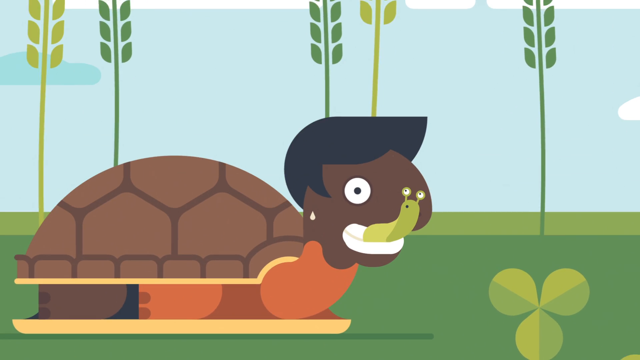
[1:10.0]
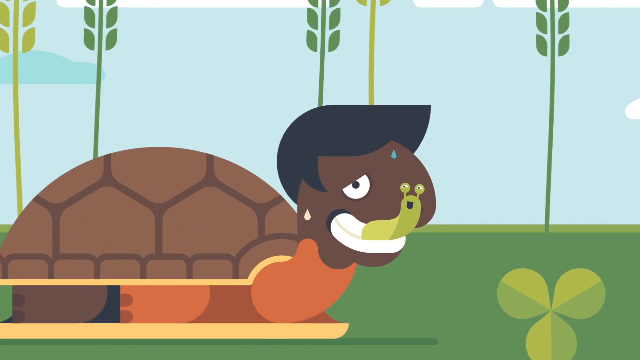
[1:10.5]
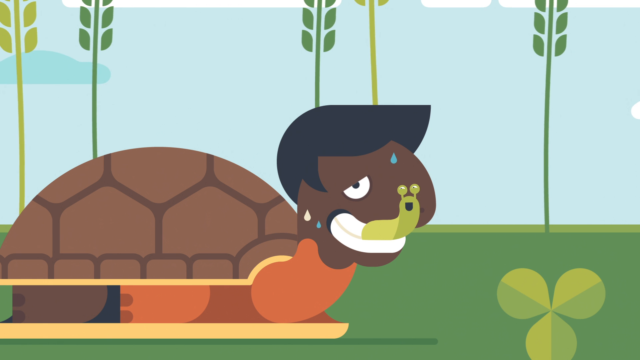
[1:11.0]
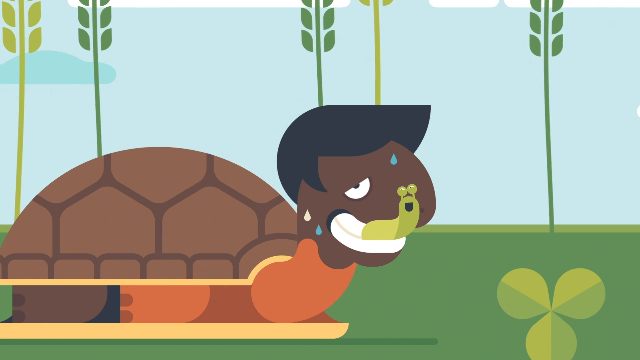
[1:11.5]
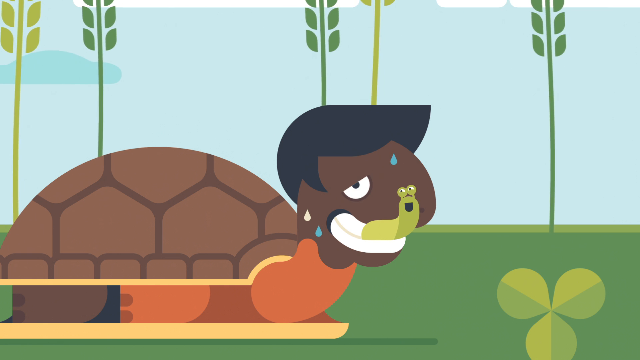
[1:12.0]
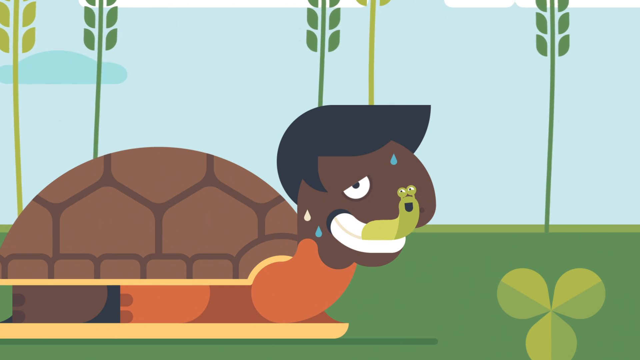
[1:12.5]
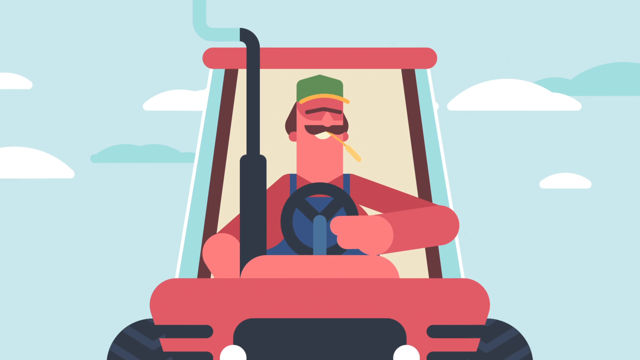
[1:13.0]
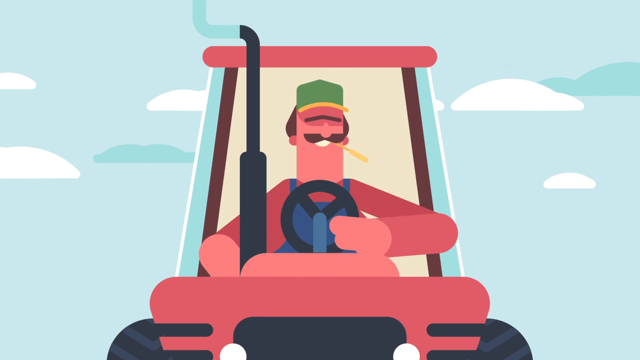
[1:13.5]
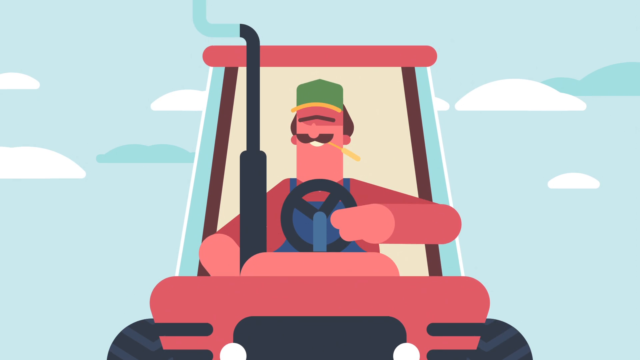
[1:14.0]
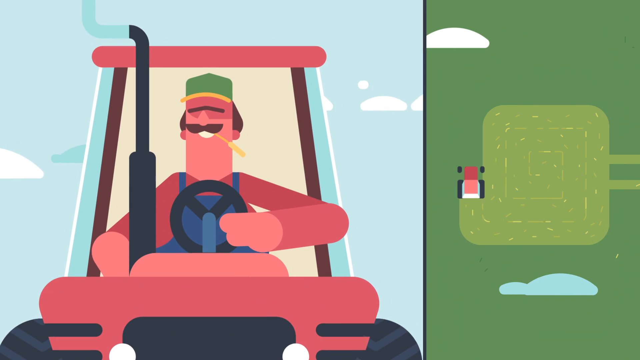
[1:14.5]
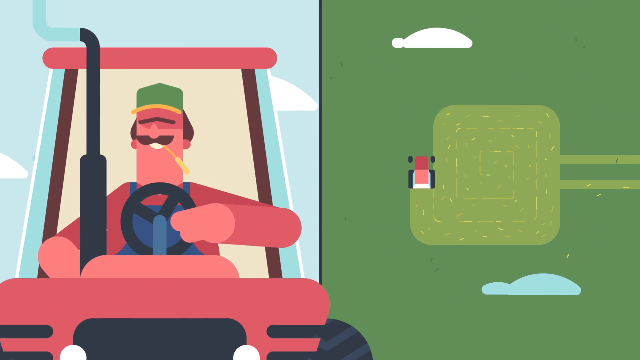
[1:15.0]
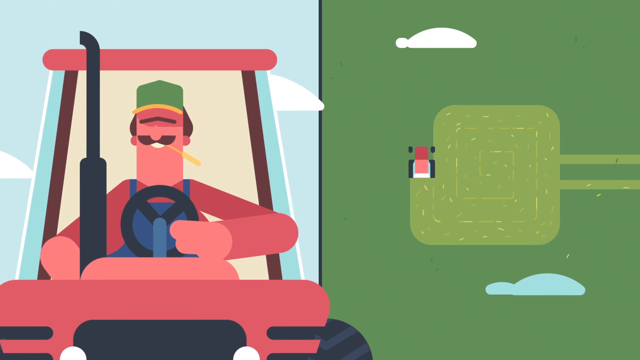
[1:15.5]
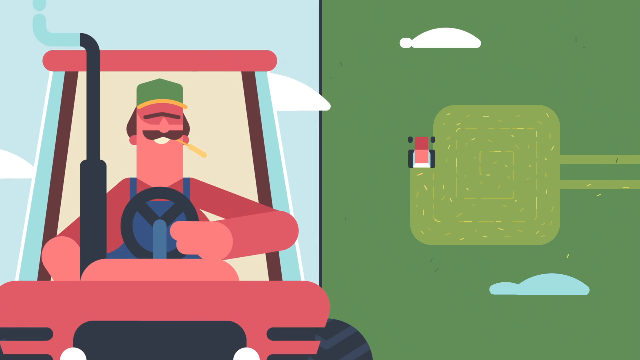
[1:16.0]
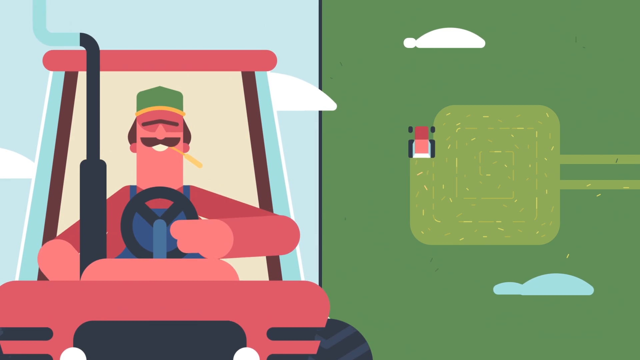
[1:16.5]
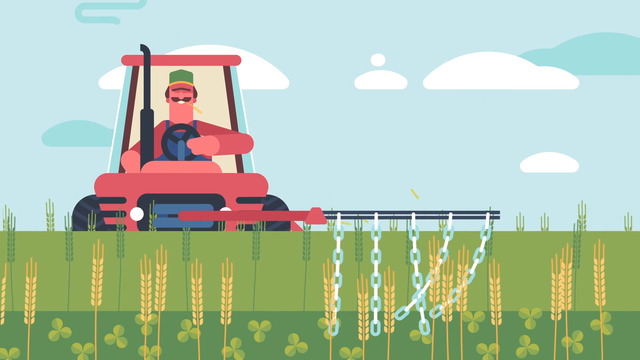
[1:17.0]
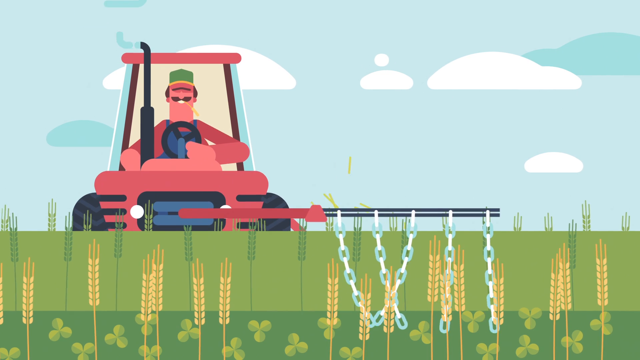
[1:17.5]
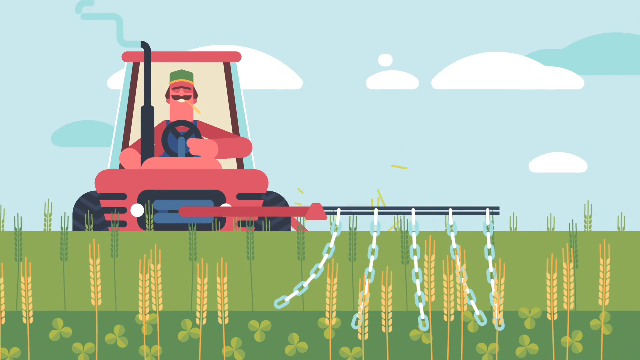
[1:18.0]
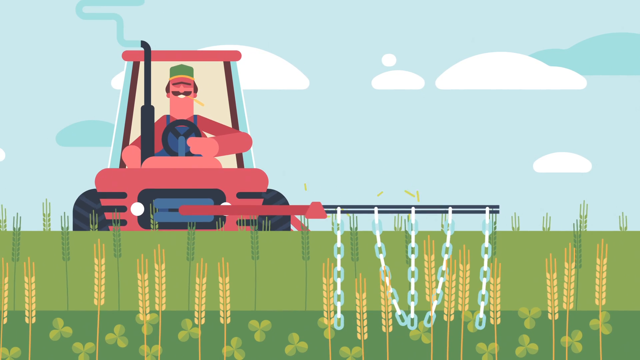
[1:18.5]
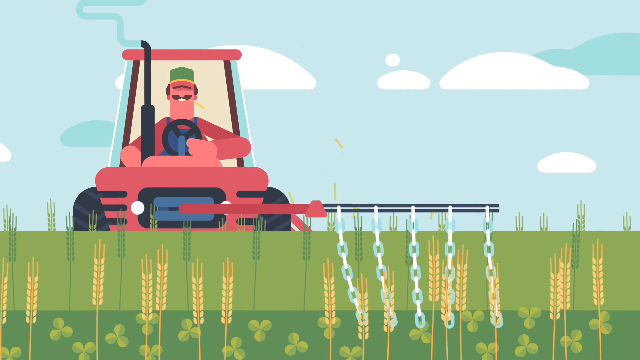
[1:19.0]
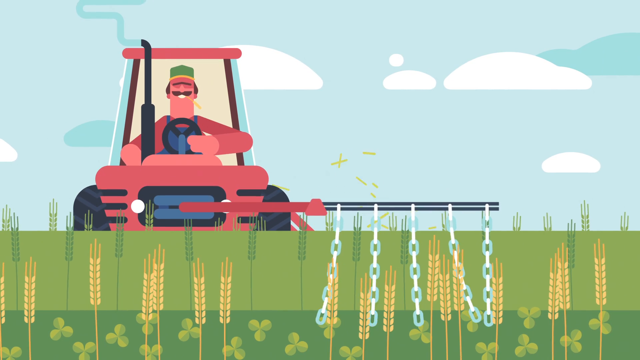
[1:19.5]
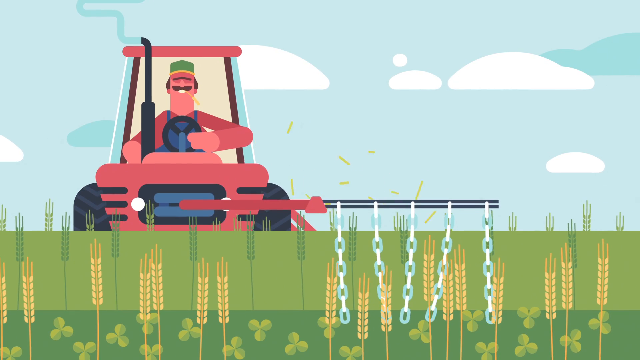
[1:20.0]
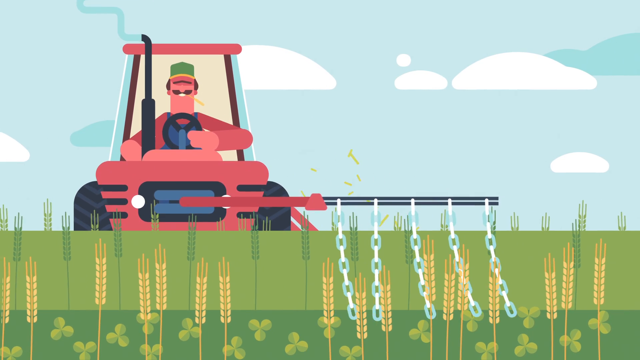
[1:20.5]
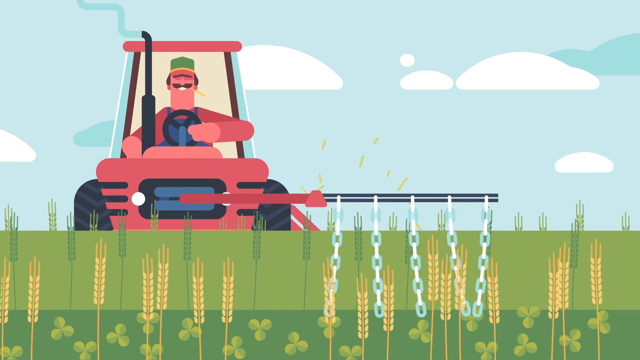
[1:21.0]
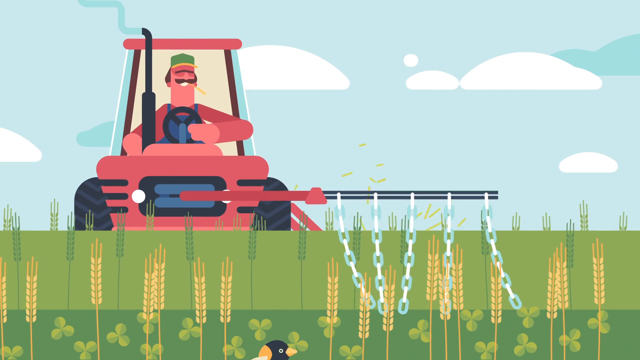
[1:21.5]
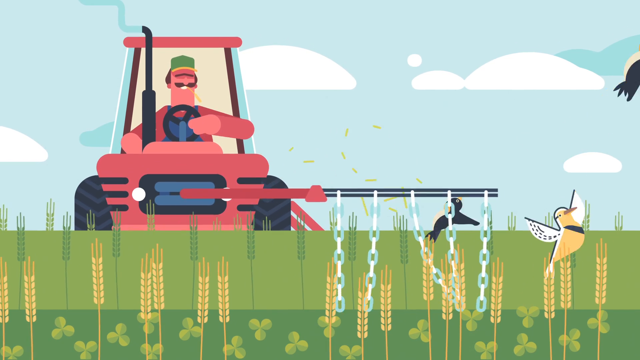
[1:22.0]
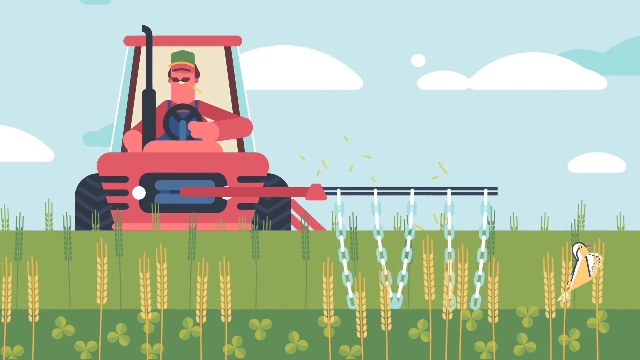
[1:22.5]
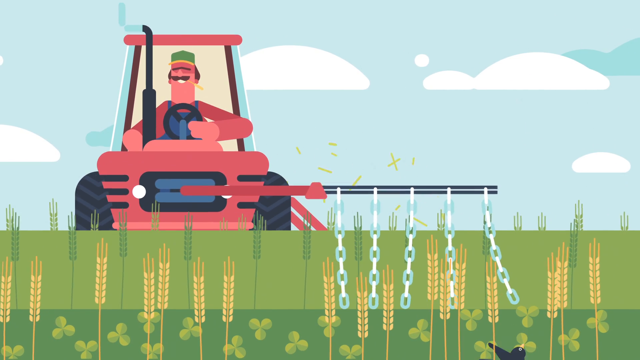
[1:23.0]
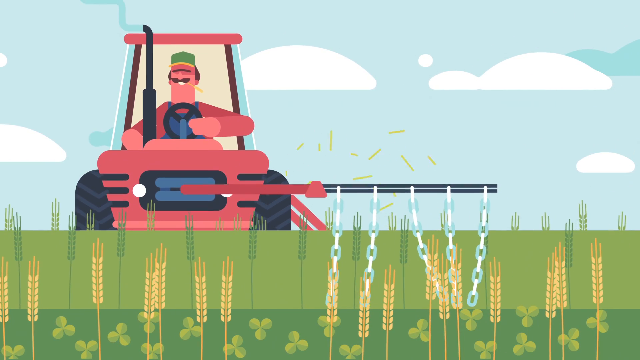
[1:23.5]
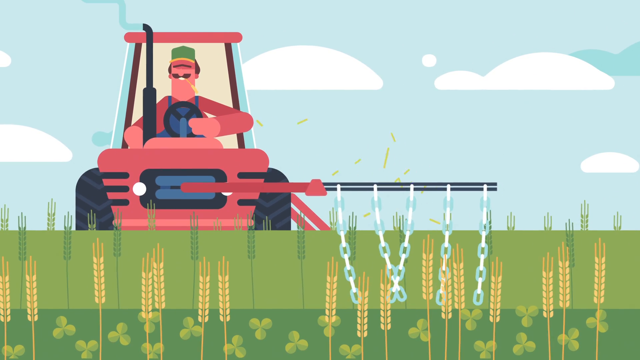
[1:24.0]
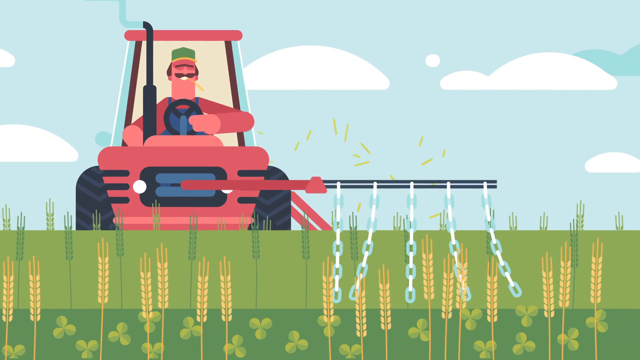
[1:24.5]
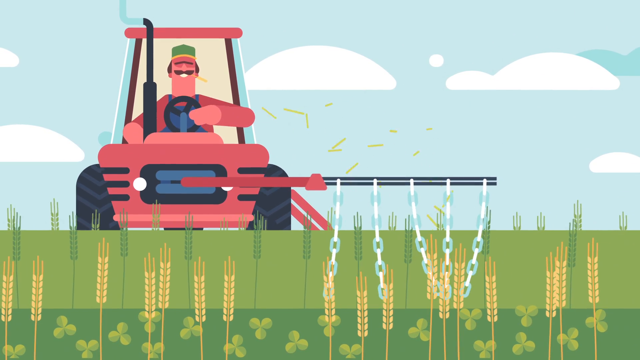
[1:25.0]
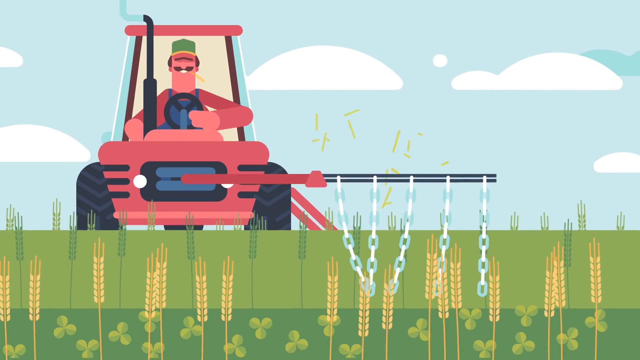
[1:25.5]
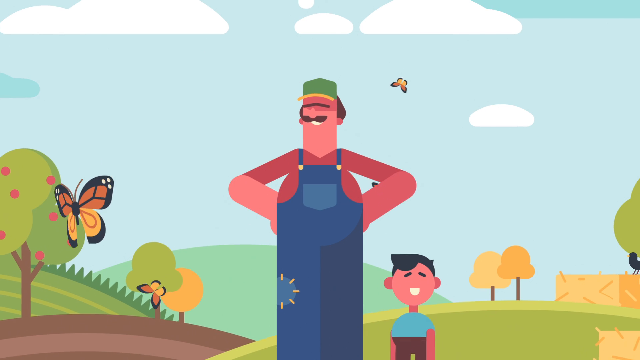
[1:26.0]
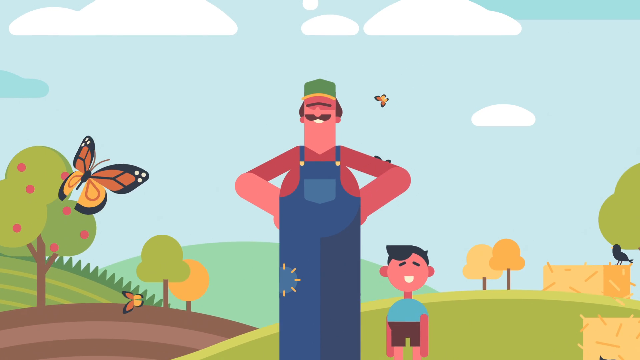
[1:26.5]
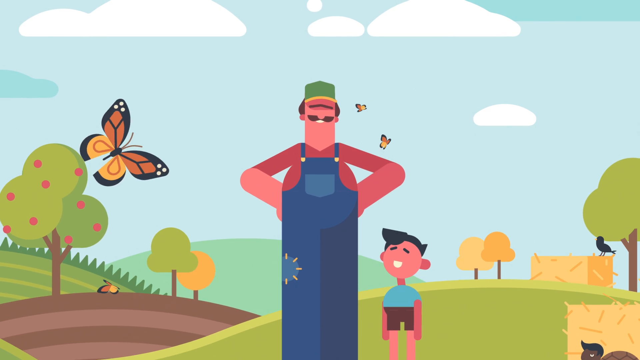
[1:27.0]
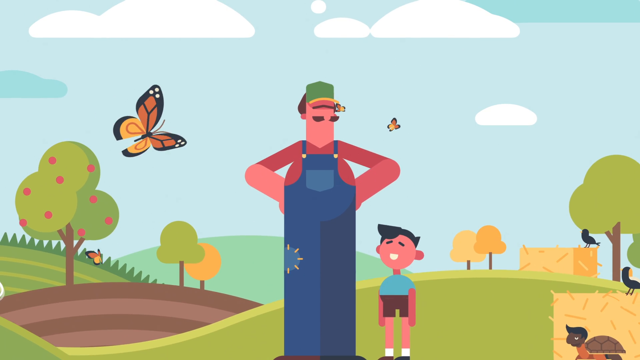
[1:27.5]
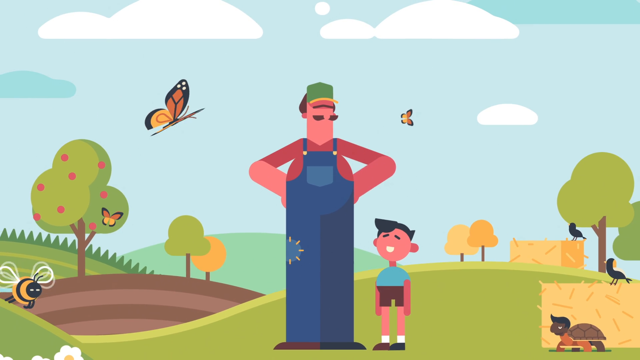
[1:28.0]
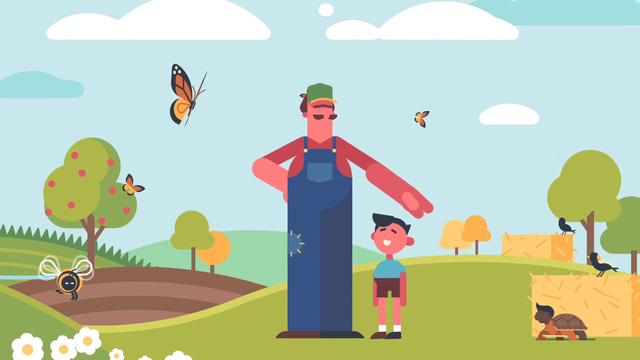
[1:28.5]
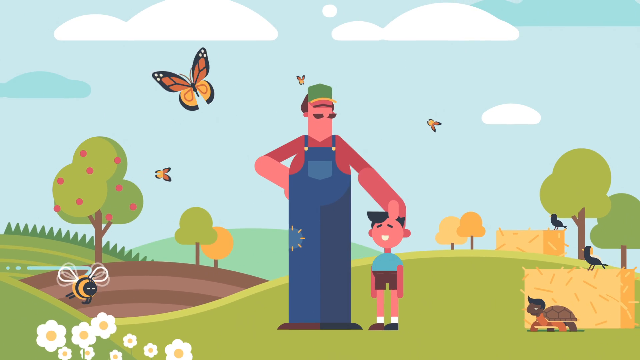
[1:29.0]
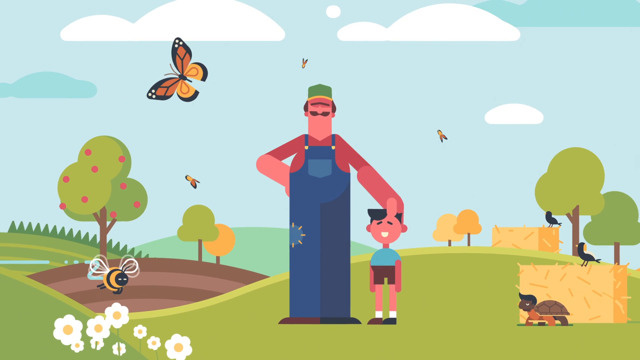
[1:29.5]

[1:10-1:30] A turtle eats a snail, and then the turtle appears to be sweating, possibly relieved. In the next scene a farmer drives a red tractor. The screen becomes a split screen showing the farmer's point of view as he drives and the area he is mowing, where he is making a concentric square path. In the next scene the farmer drives the tractor again, with a long pole to the left of his driver's side from which five chains hang down vertically. The chains swing side to side, supposedly warning the birds that the tractor is coming, and about six birds fly away from the area. In the last scene, the farmer is out of his tractor, standing next to a boy, and both are smiling, likely pleased that no animals were hurt. This scene contains two bales of hay, the turtle, two birds, four butterflies, and one bumblebee.